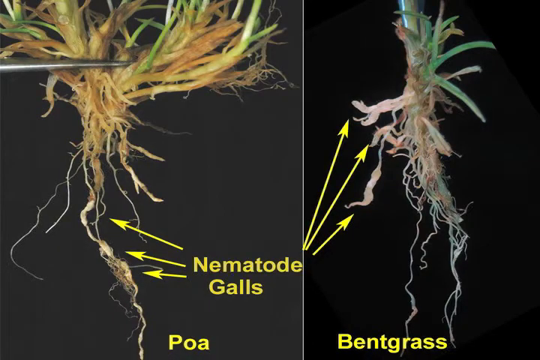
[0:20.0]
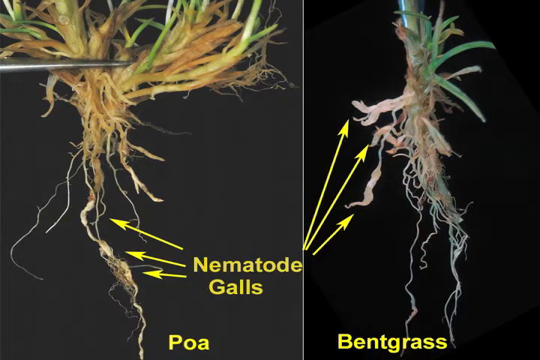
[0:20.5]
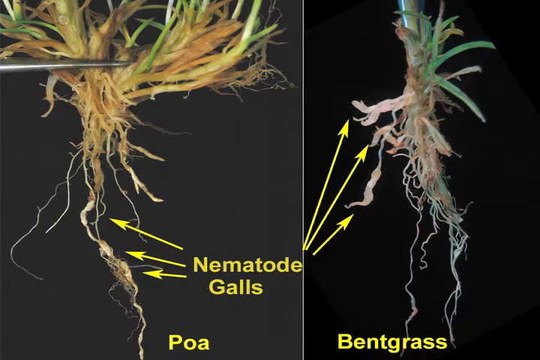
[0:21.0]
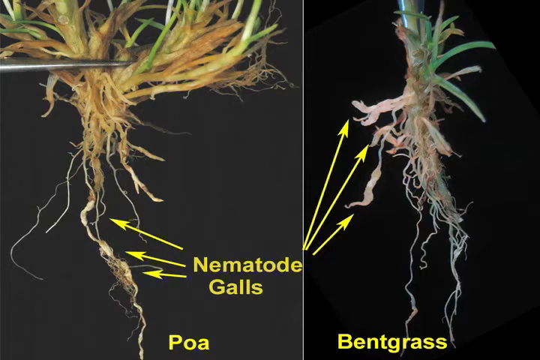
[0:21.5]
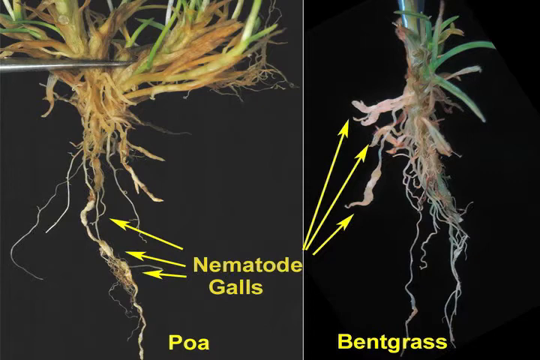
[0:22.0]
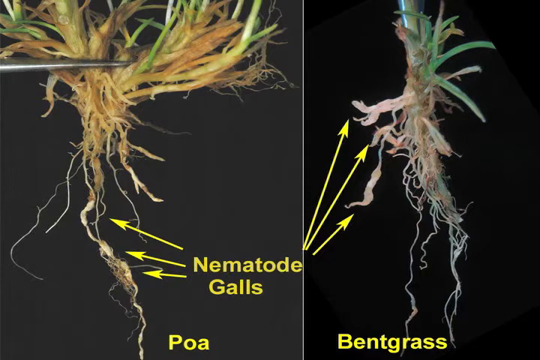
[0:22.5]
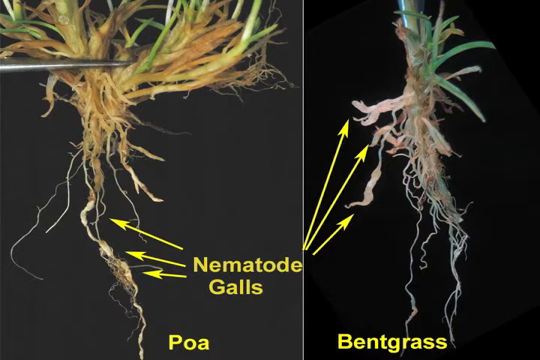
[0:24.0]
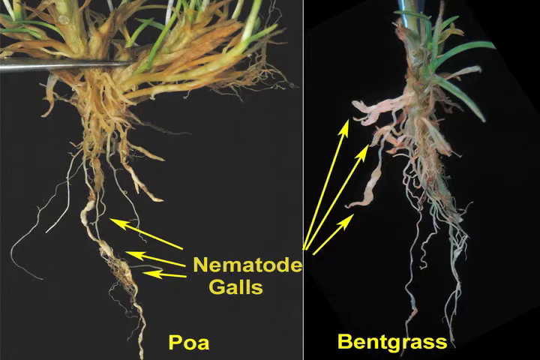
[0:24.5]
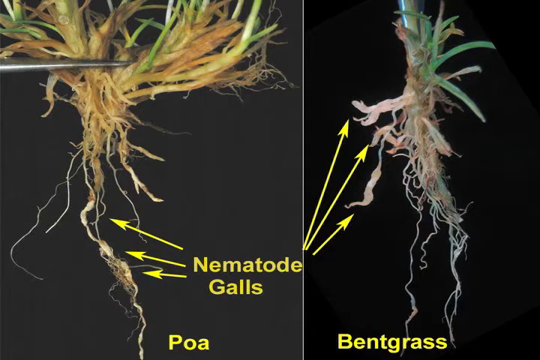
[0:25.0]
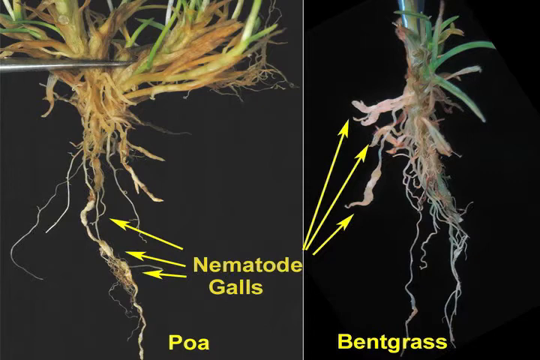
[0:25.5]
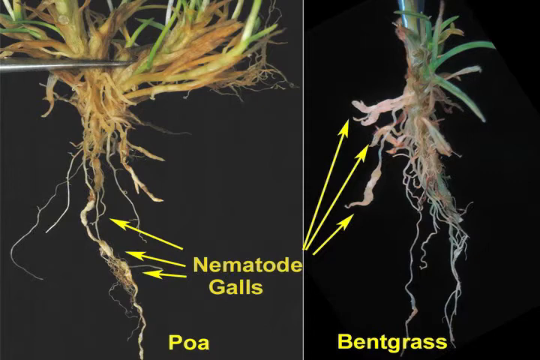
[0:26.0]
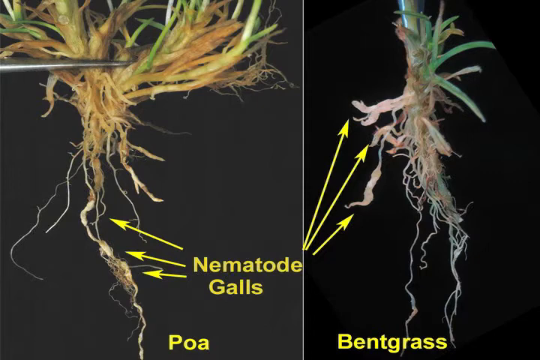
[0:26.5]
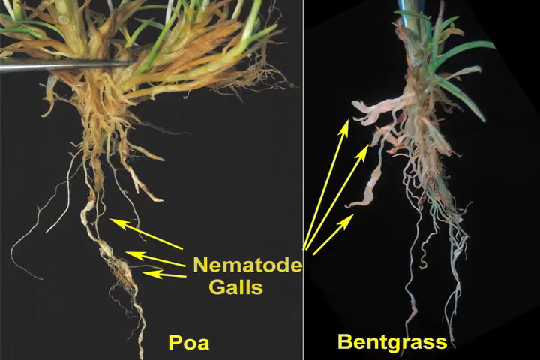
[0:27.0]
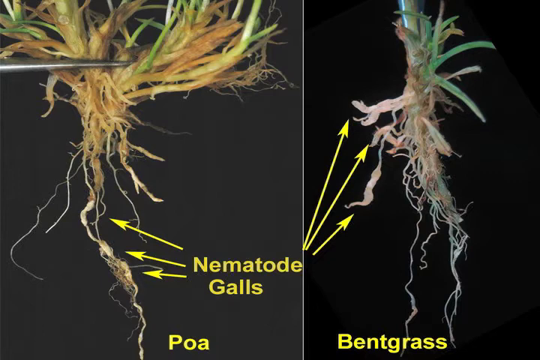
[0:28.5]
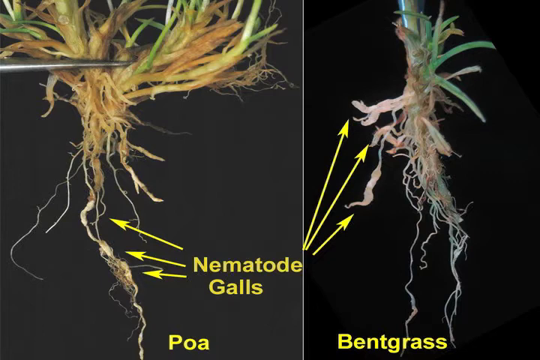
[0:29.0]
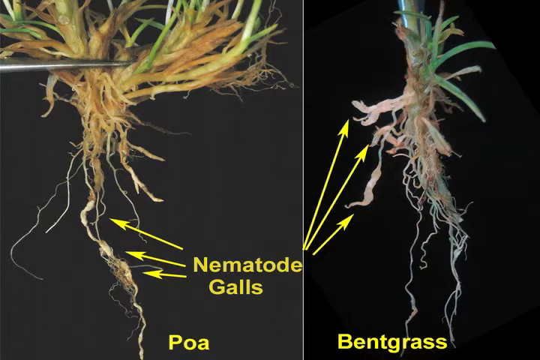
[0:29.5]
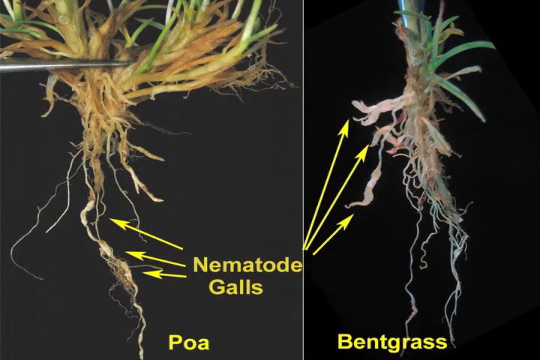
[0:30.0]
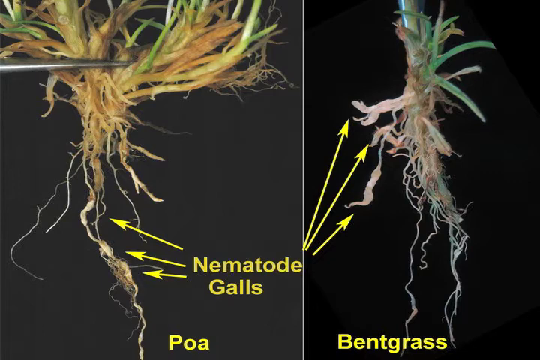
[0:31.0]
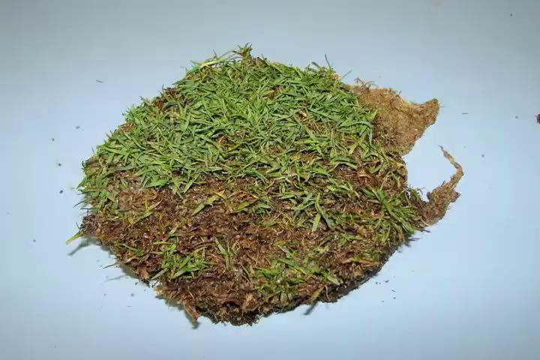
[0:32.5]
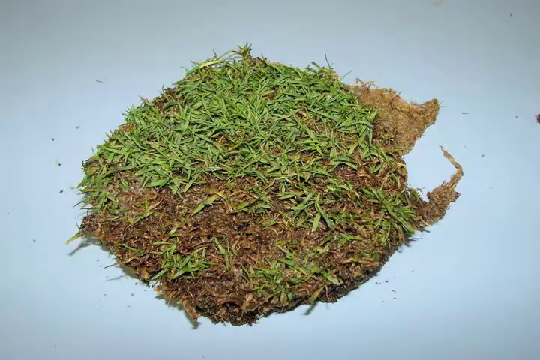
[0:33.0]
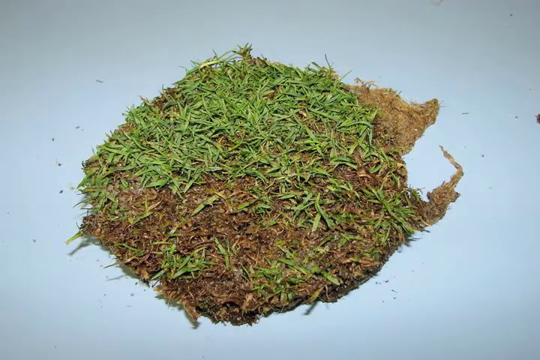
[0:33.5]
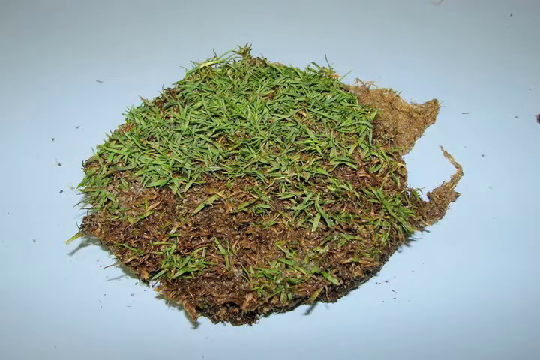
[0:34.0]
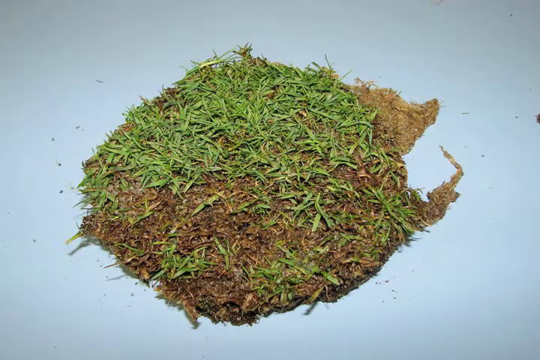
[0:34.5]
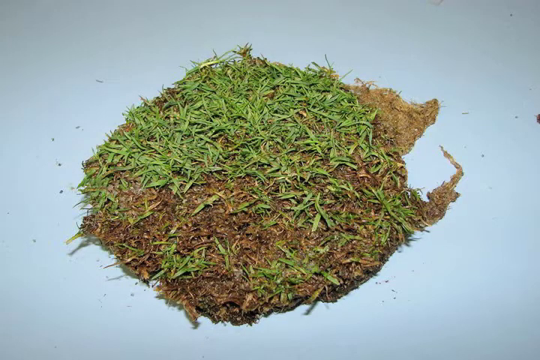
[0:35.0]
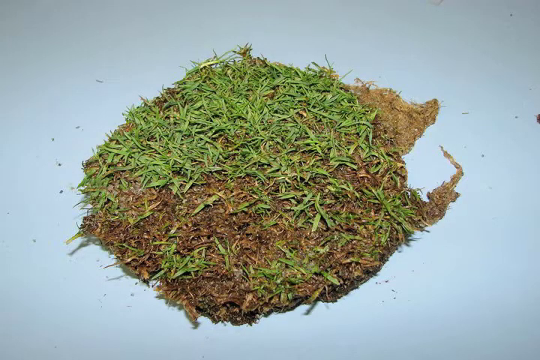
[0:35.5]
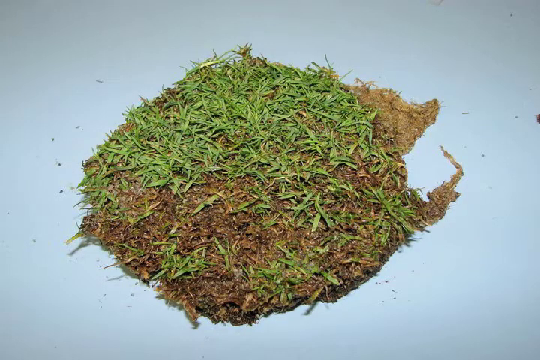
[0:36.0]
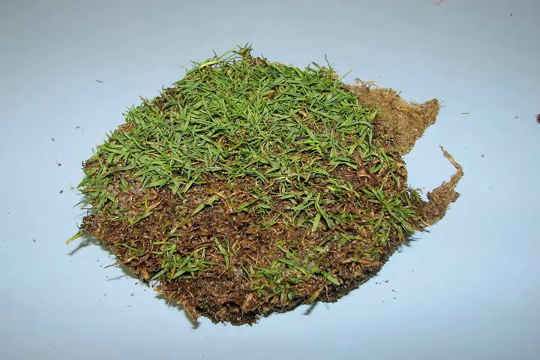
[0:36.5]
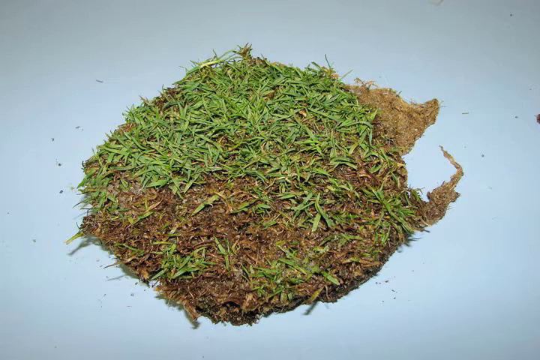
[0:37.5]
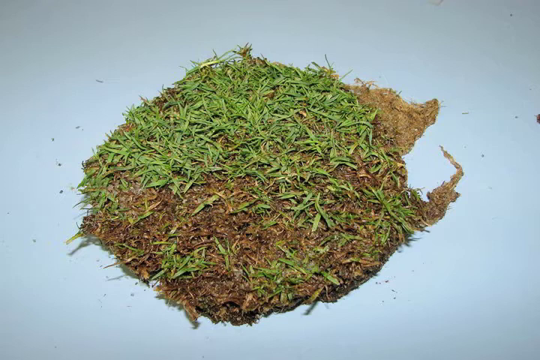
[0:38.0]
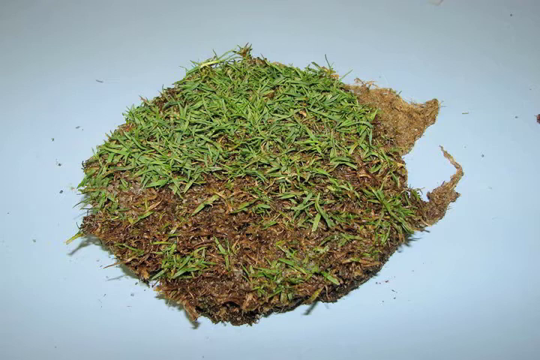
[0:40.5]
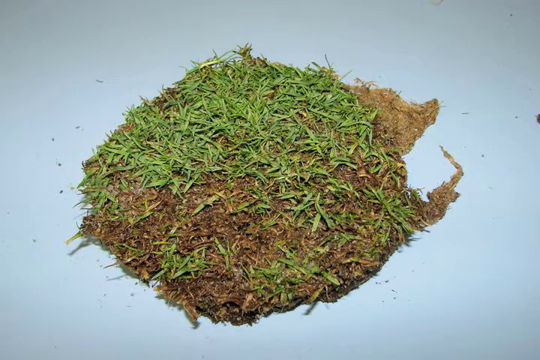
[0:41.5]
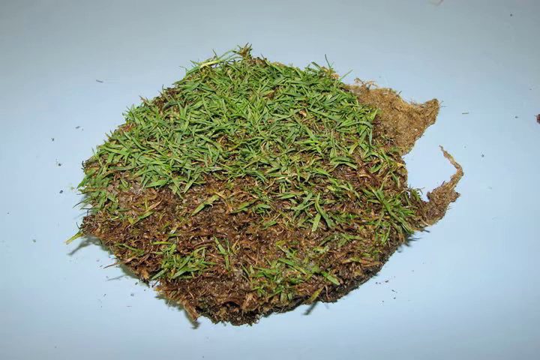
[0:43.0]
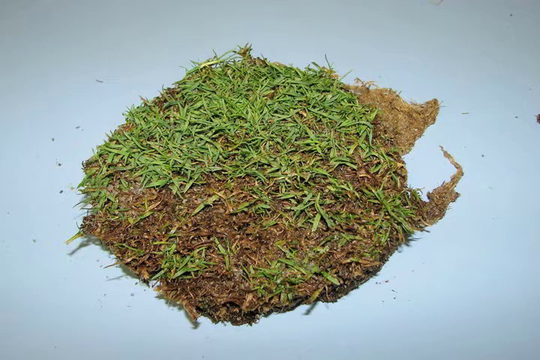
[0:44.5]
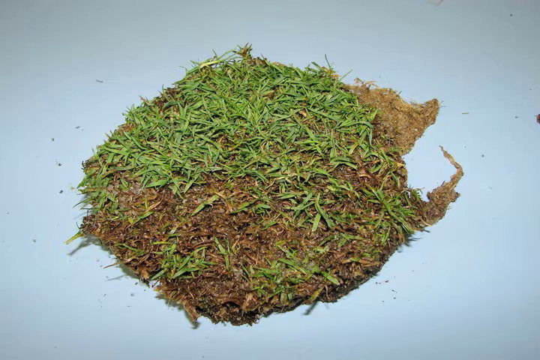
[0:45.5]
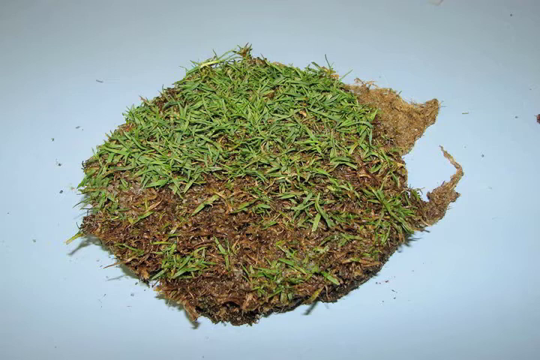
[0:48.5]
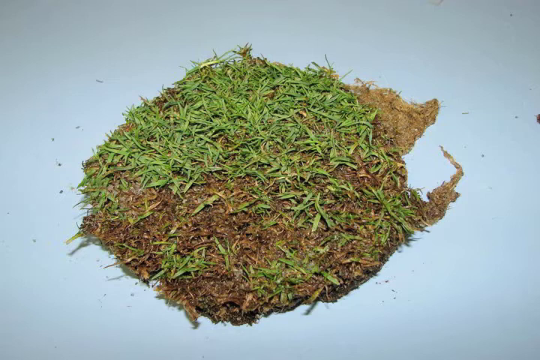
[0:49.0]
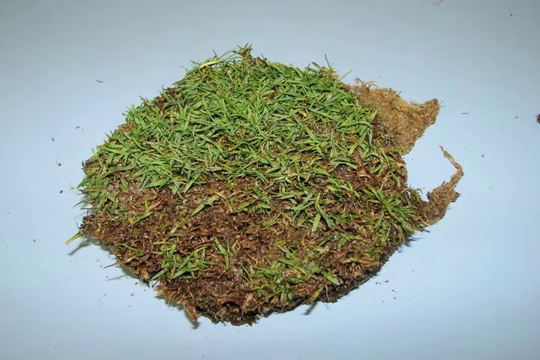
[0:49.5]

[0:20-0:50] Smaller white roots hang lower than the larger ones and are not labeled at this time. These roots seem to be longer and more stringy. A small white line separates the two photos. The patch of grass on top of the white table is shown again. Small dirt specks, separated off the main piece, surround the patch of grass on the table. The dirt patch has less grass toward the bottom and a denser piece at the top. In the side-by-side image of the nematode galls, the left image is on a dark gray background and the right image is on a black background. The left picture is a front-facing view and the right one is a side view.